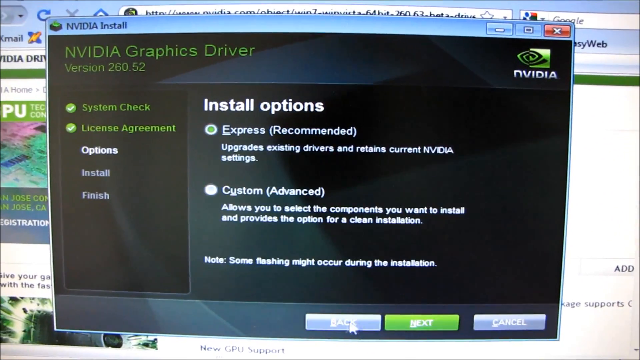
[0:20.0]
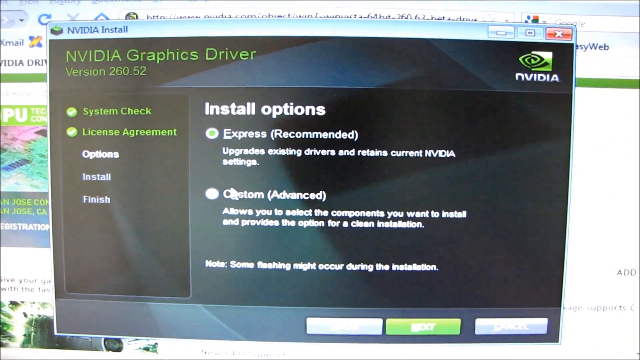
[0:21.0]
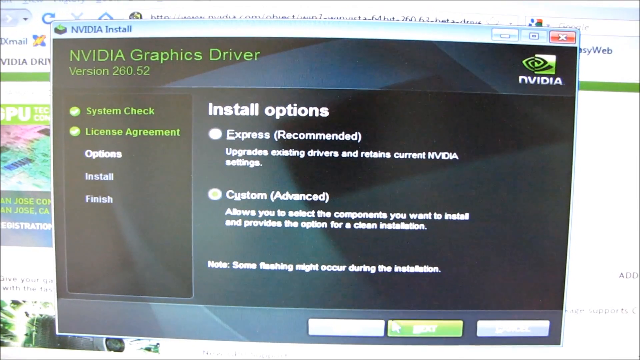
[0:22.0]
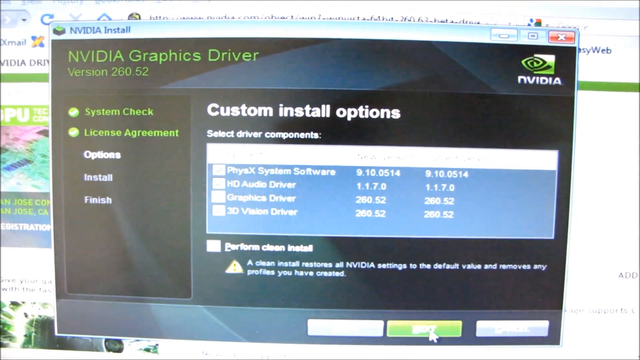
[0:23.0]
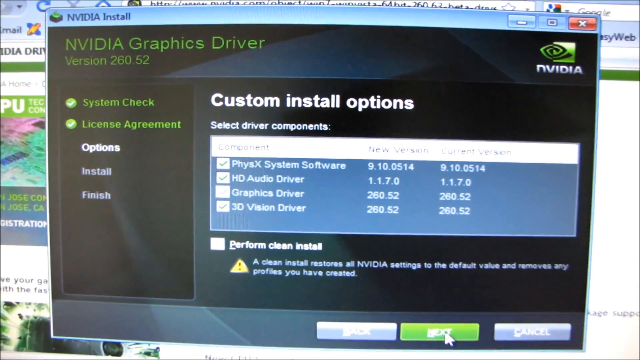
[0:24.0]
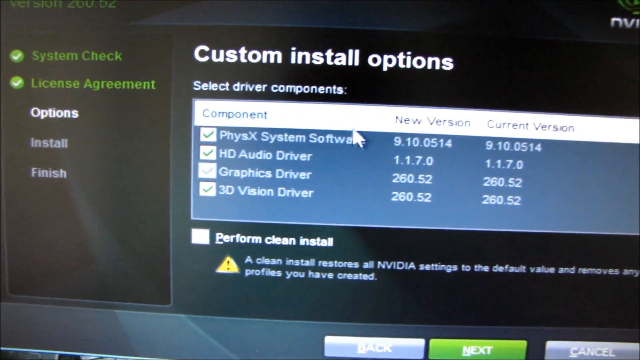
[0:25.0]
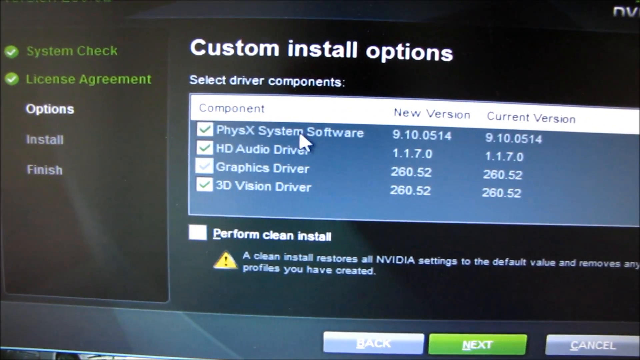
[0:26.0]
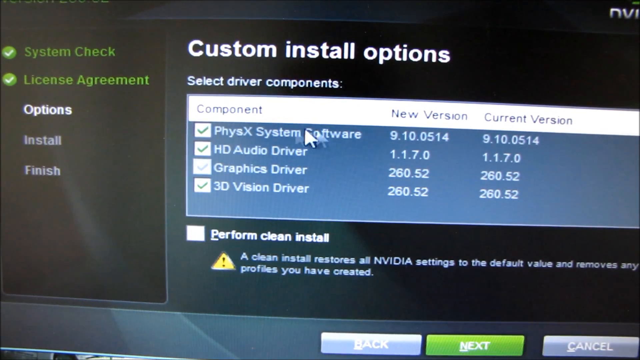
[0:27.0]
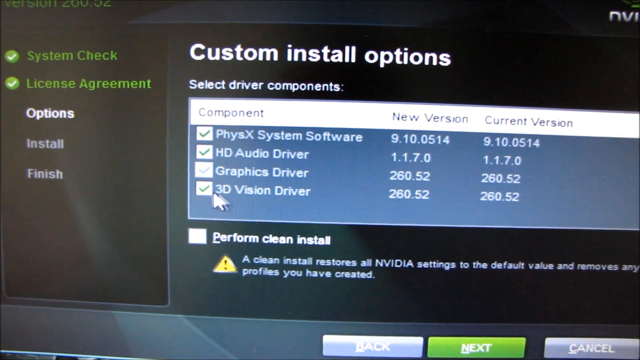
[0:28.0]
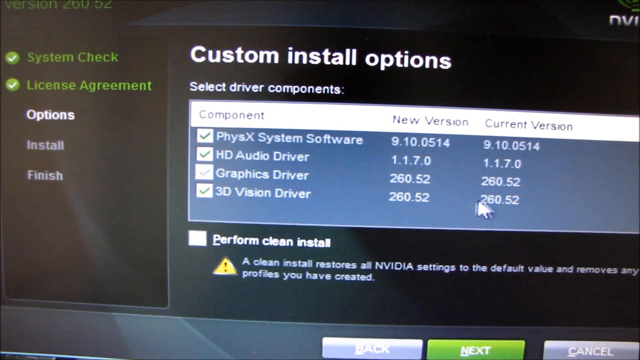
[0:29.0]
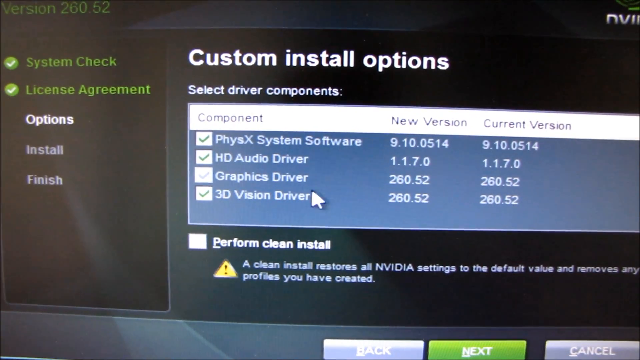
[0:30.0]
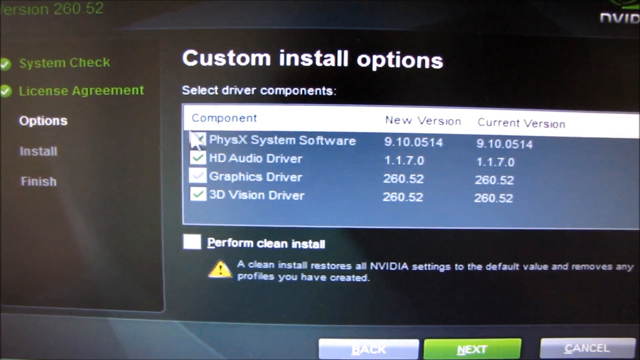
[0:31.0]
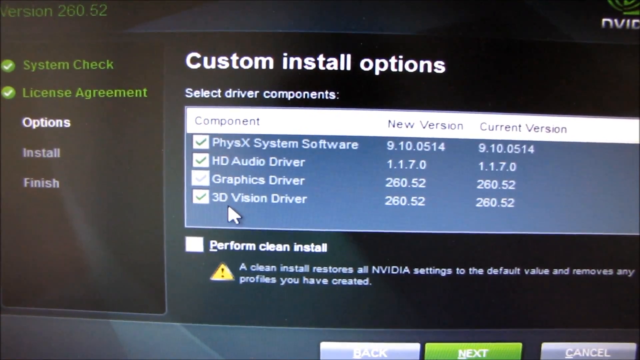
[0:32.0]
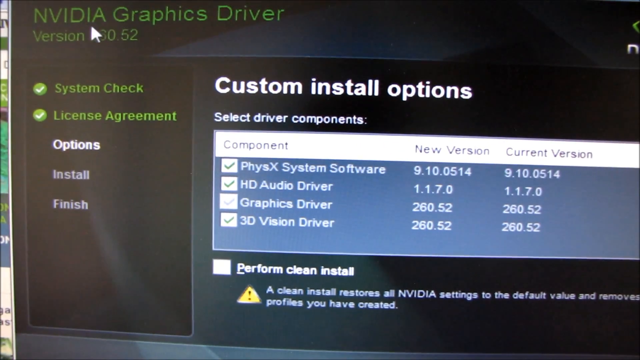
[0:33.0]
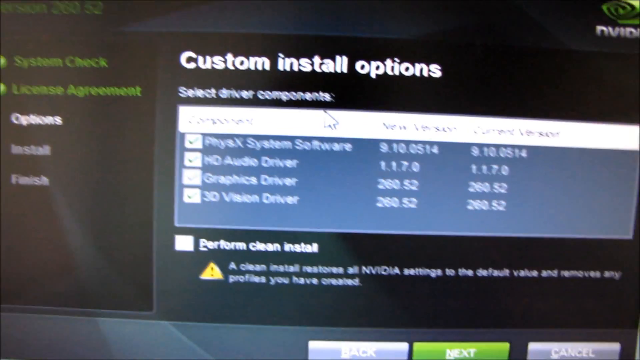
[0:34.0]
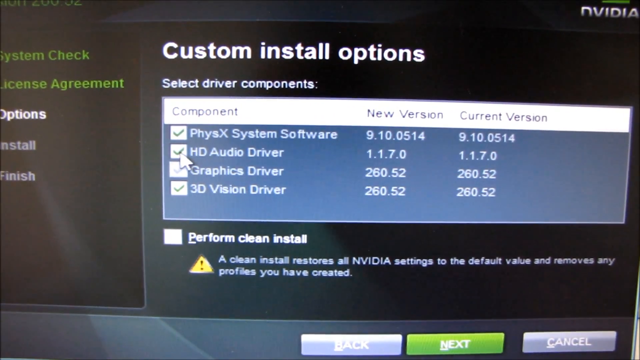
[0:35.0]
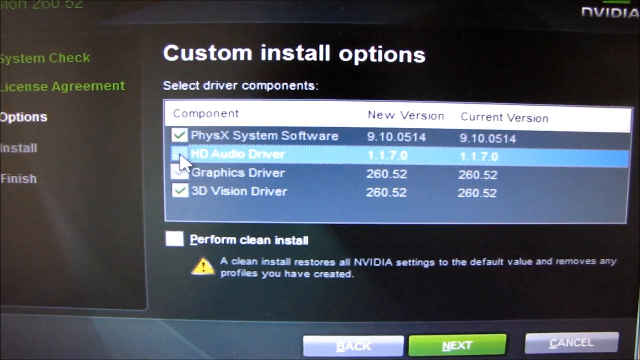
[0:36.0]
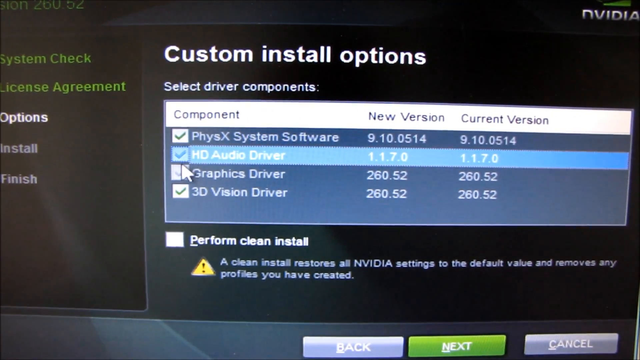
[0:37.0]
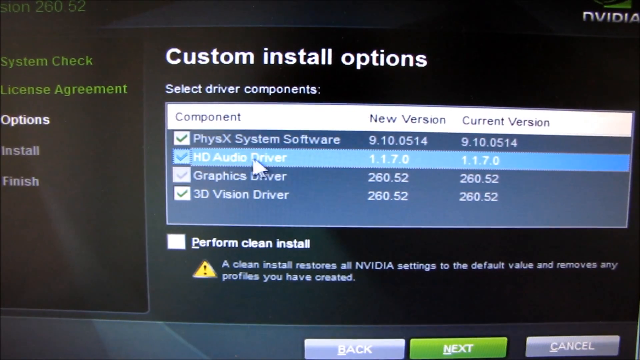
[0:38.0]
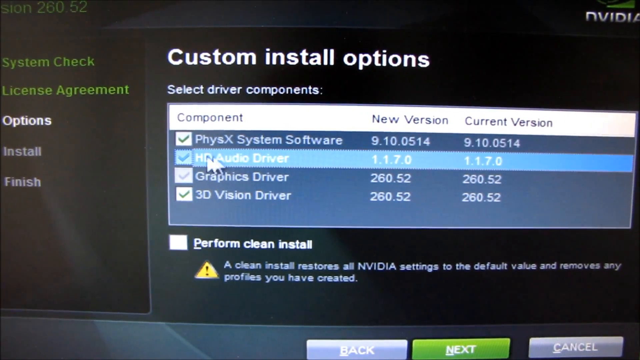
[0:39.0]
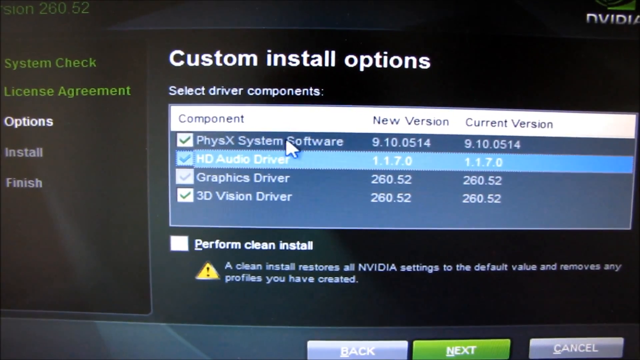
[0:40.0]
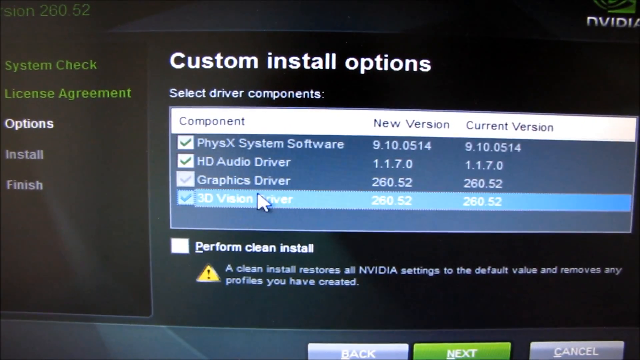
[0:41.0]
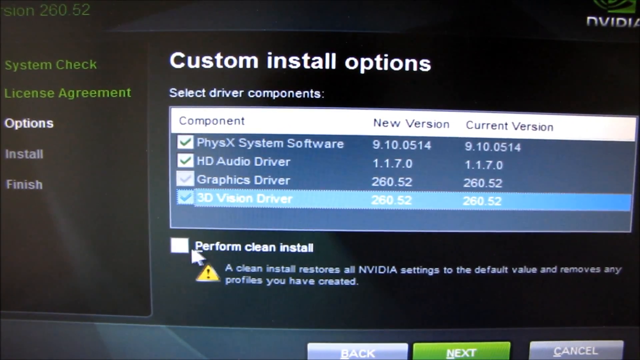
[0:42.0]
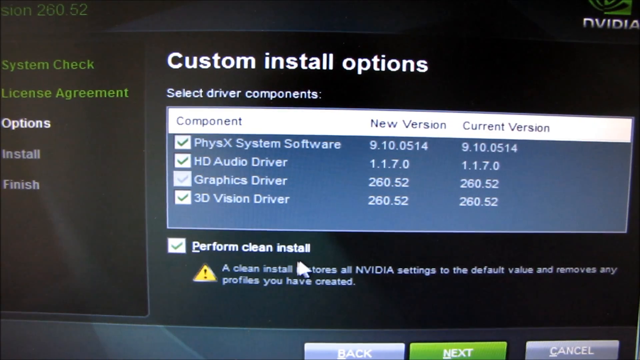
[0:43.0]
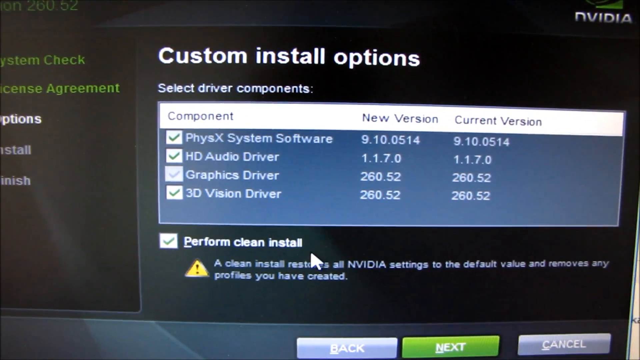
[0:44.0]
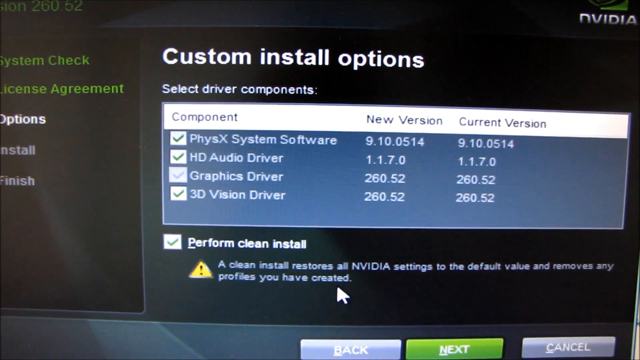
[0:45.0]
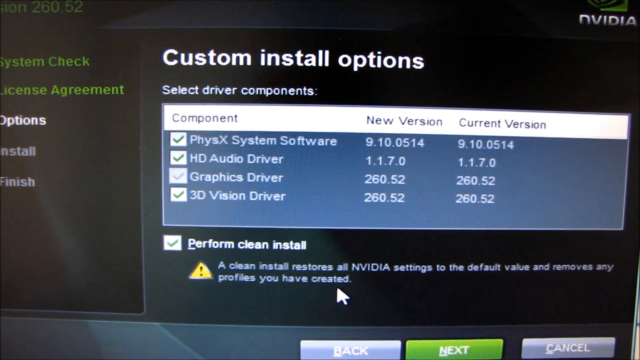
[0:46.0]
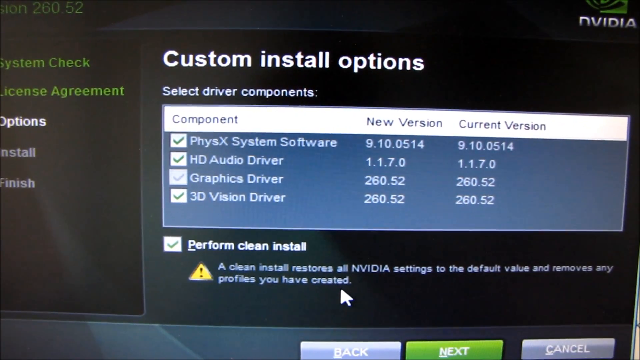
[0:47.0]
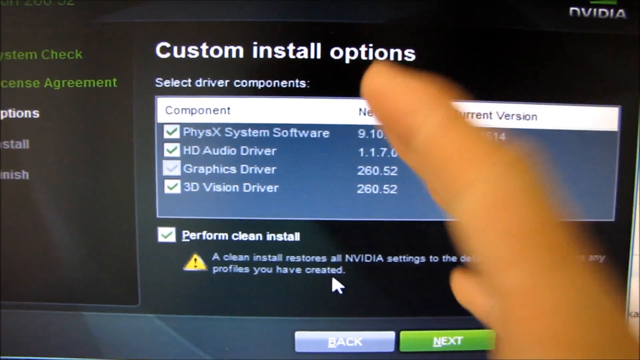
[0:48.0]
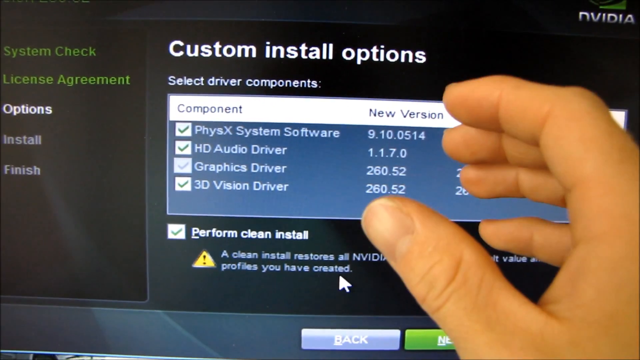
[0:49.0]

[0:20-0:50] An installation options window opens with two choices: an express option, marked as recommended, and a custom option, marked as more advanced. The express option is currently selected, but the user clicks a different green button at the bottom whose label is unreadable. This opens the custom install options, a window listing four components: PhysX system software, HD audio driver, graphics driver and 3D vision driver. Of the four, only graphics driver is not checked. The user hovers the mouse over the four options, underlines the 3D vision driver with the cursor and points to the NVIDIA graphics driver title. He clicks the HD audio driver off and then back on. He then clicks an option below the four labeled "perform clean install" and moves the mouse underneath it and down toward the center. His right hand enters the shot, gesturing toward the screen.